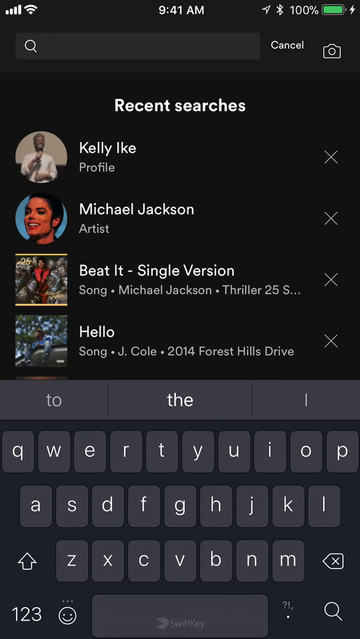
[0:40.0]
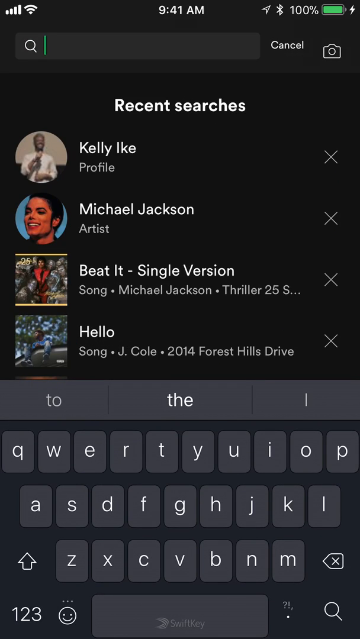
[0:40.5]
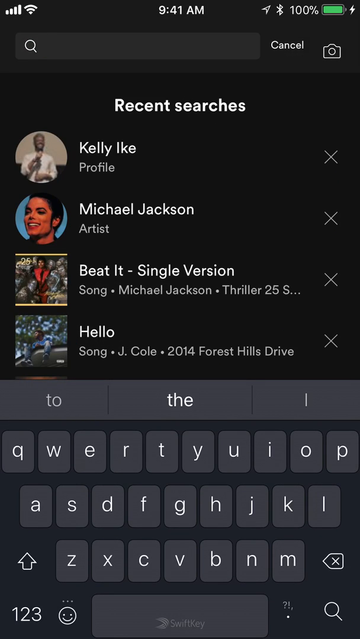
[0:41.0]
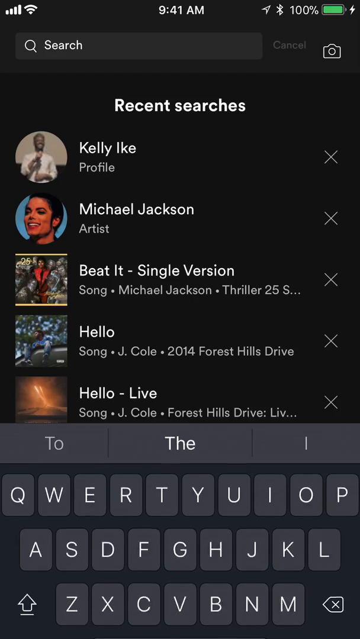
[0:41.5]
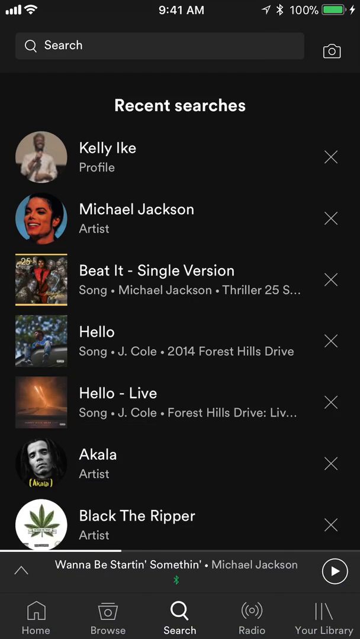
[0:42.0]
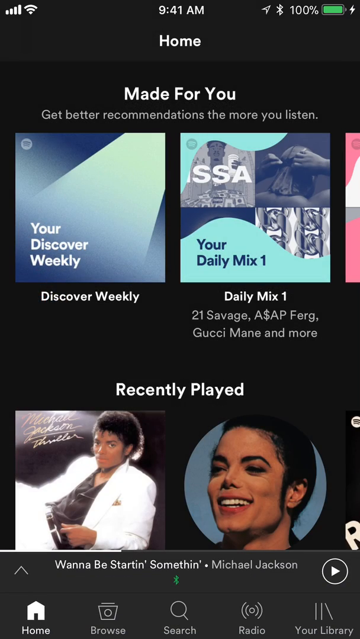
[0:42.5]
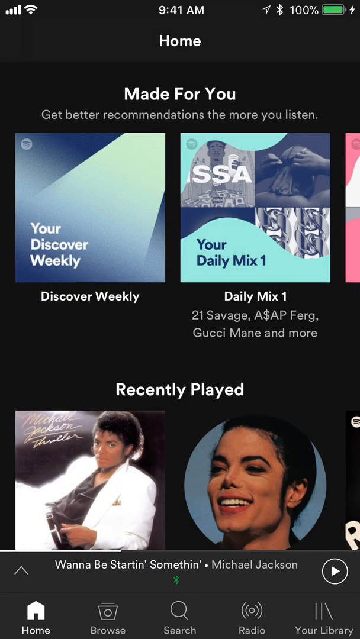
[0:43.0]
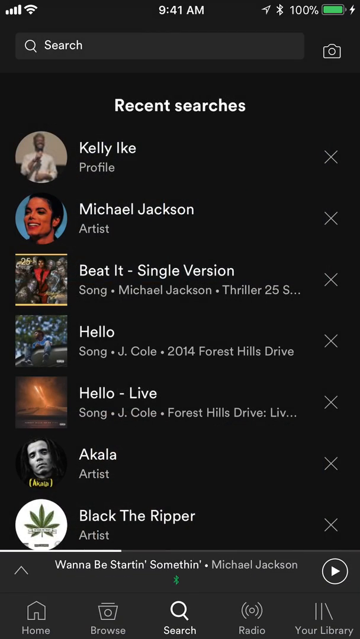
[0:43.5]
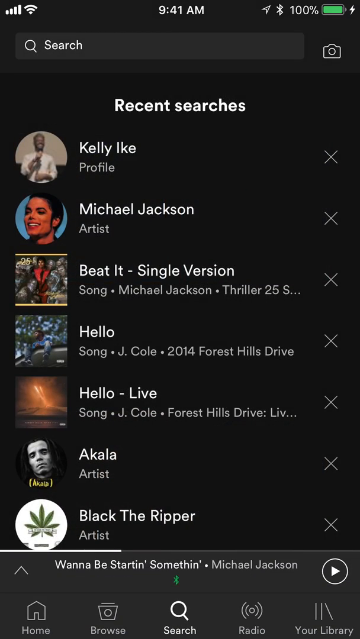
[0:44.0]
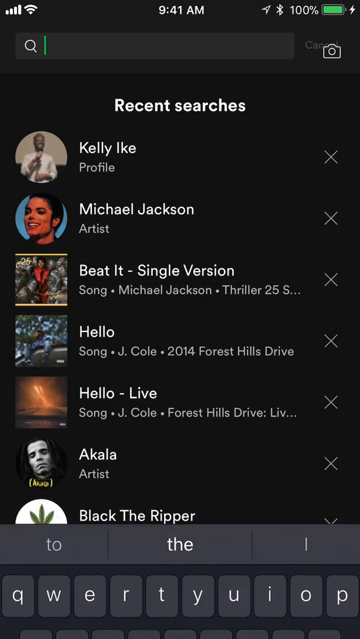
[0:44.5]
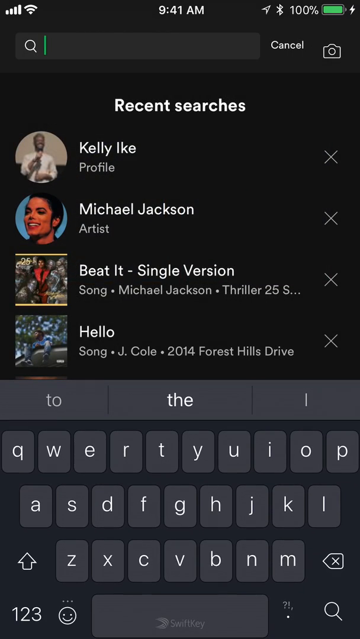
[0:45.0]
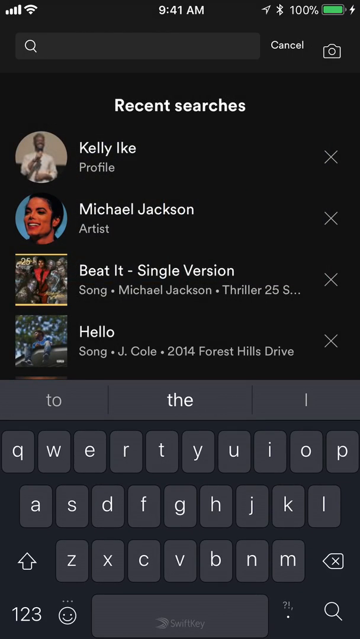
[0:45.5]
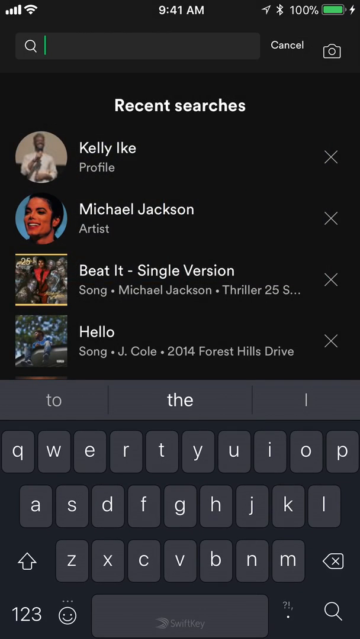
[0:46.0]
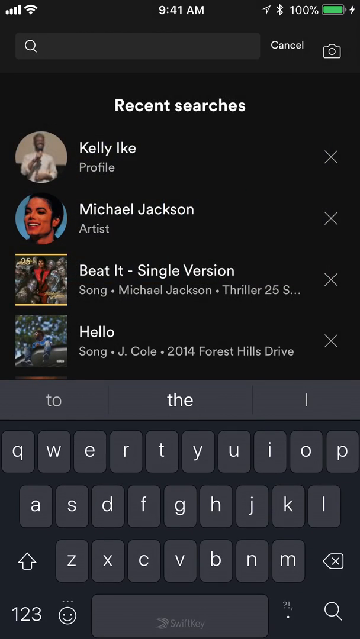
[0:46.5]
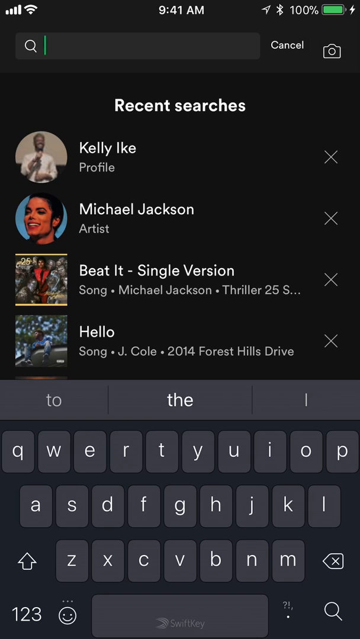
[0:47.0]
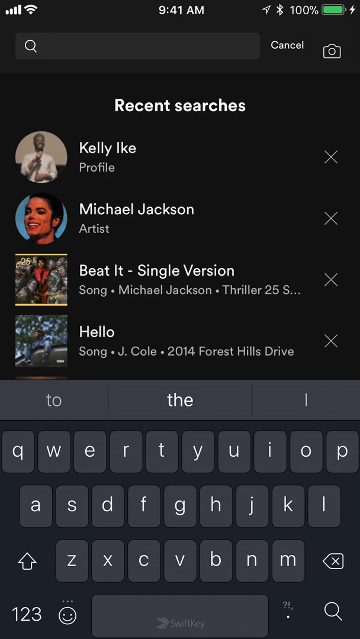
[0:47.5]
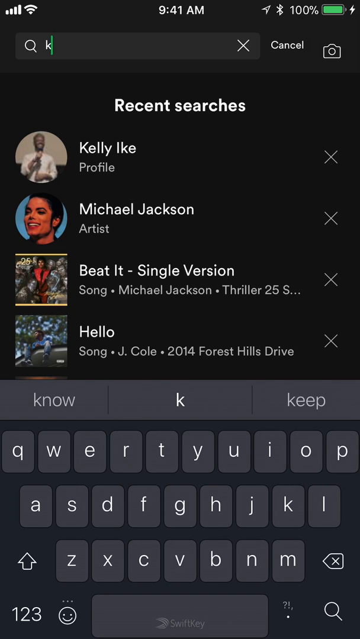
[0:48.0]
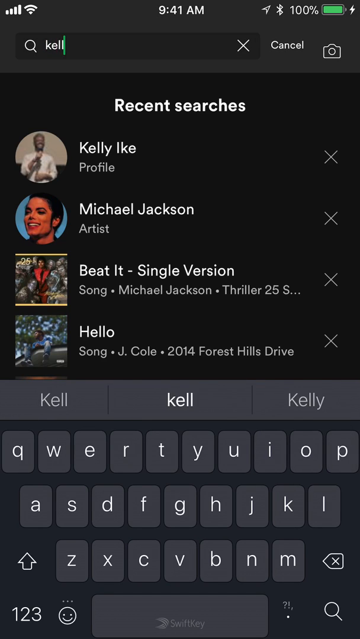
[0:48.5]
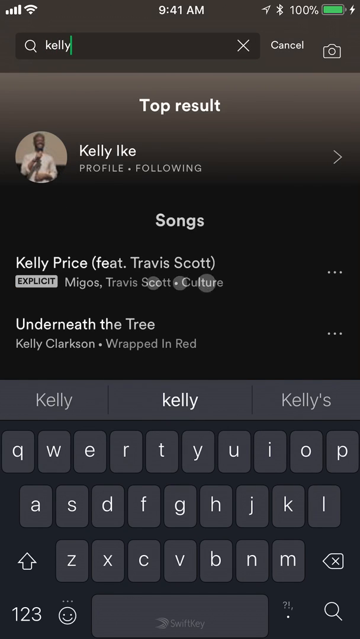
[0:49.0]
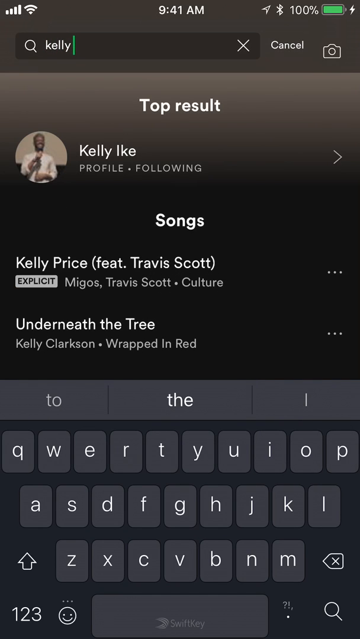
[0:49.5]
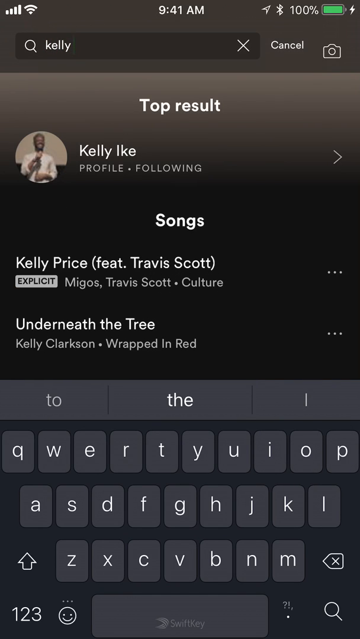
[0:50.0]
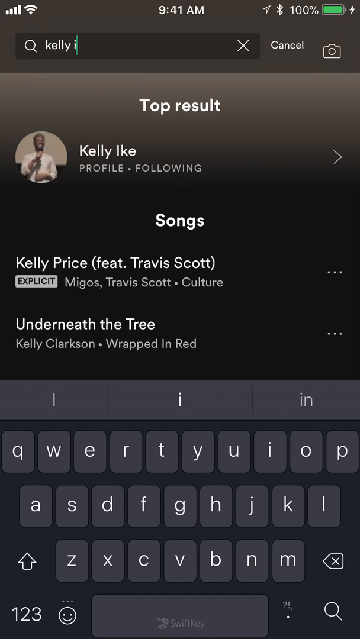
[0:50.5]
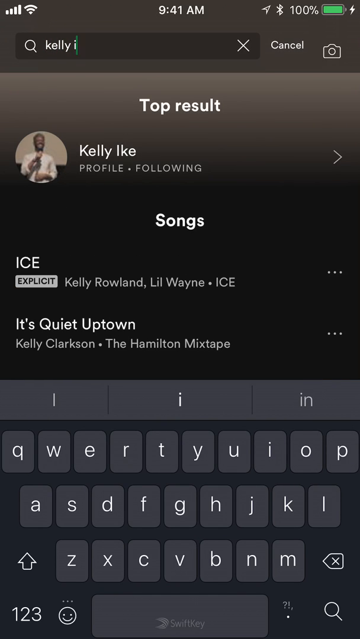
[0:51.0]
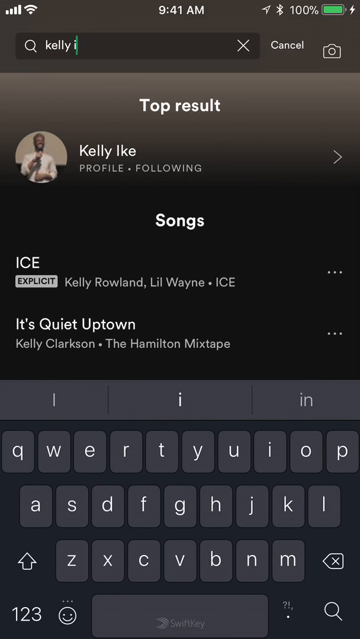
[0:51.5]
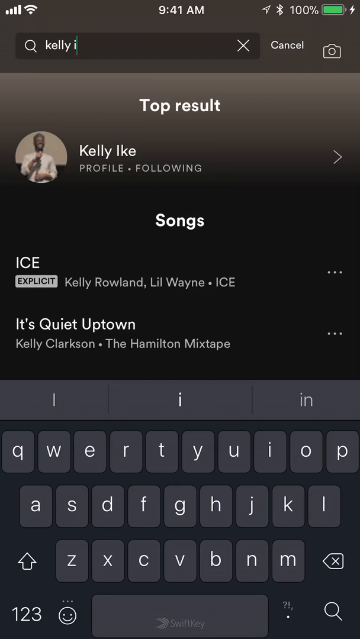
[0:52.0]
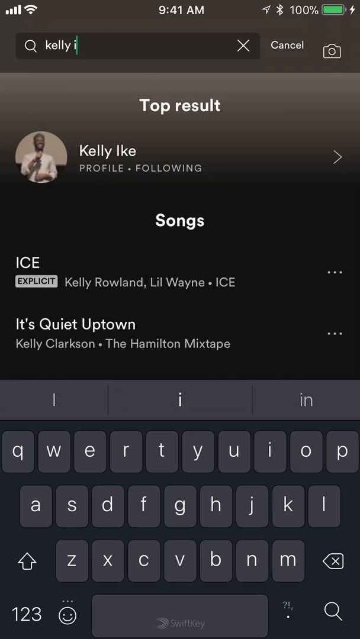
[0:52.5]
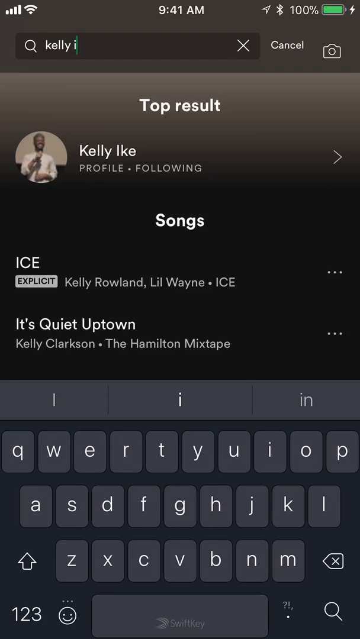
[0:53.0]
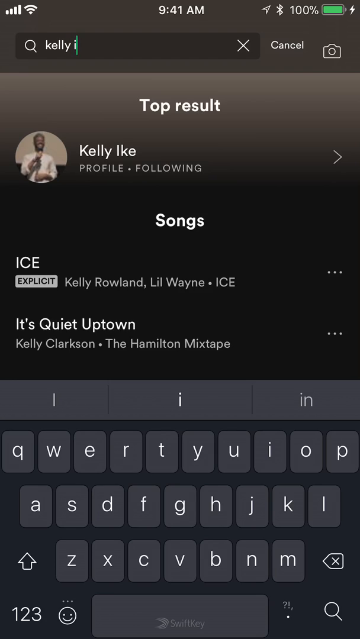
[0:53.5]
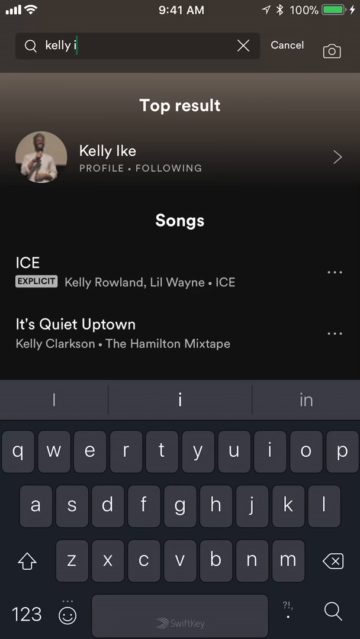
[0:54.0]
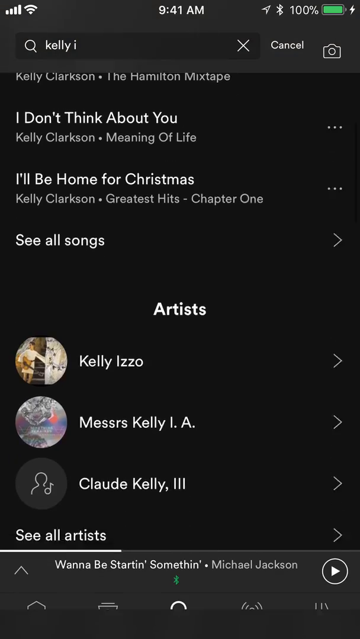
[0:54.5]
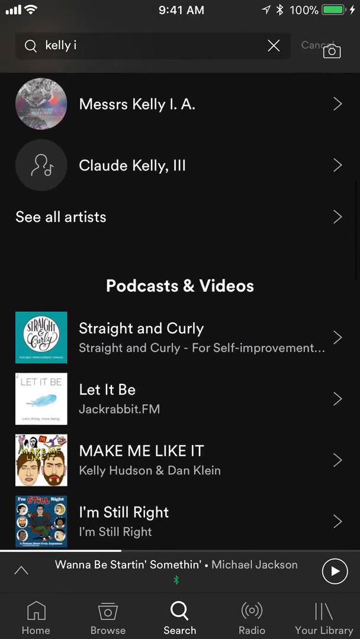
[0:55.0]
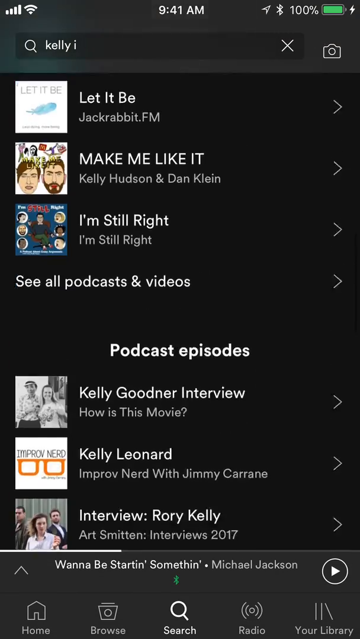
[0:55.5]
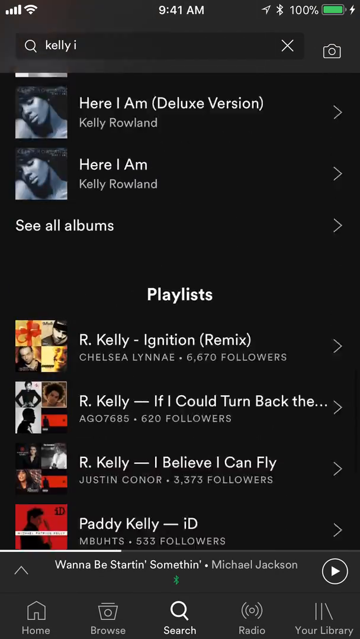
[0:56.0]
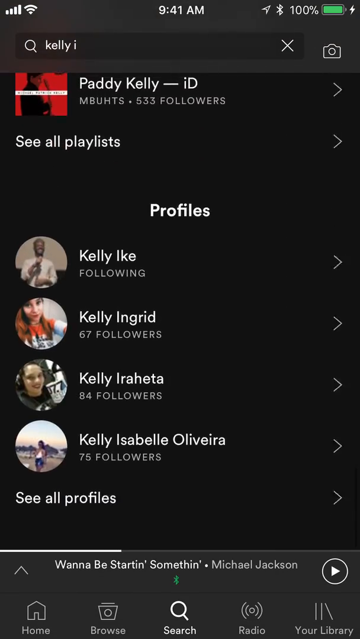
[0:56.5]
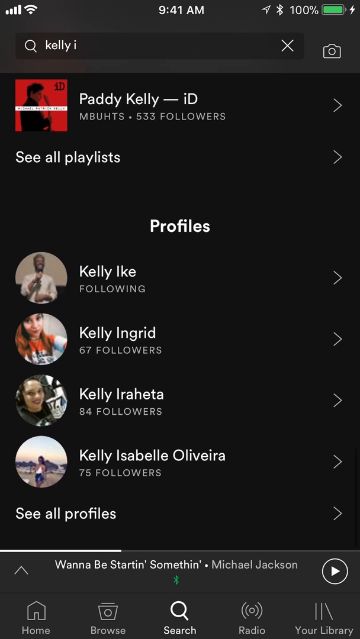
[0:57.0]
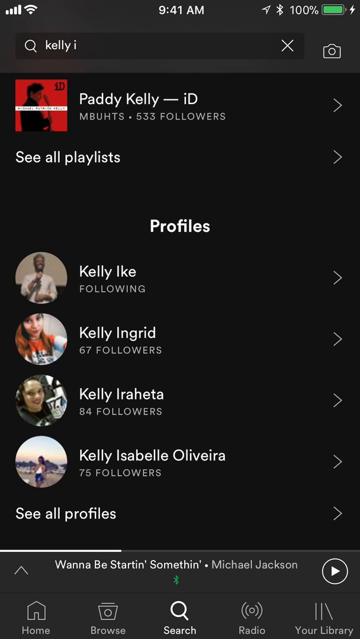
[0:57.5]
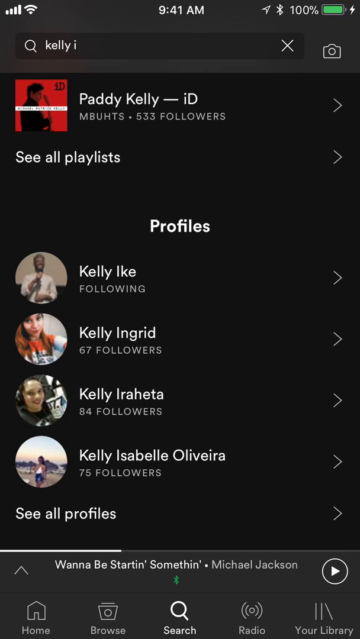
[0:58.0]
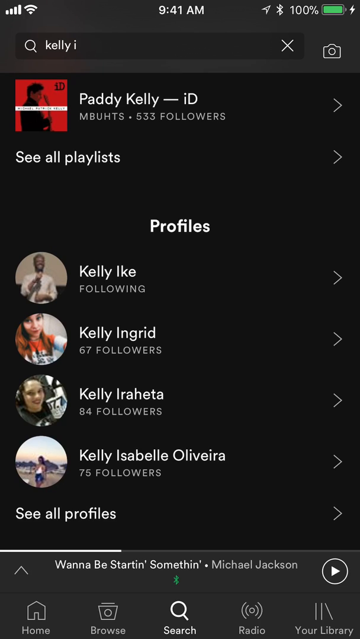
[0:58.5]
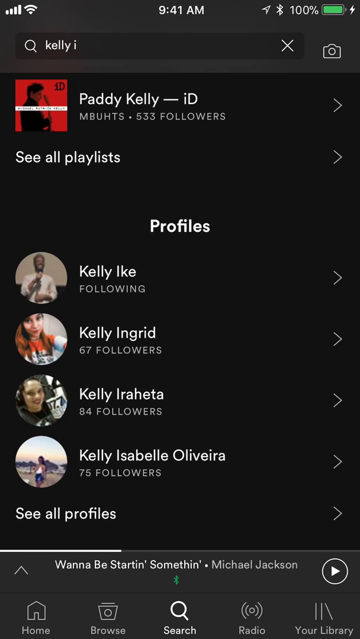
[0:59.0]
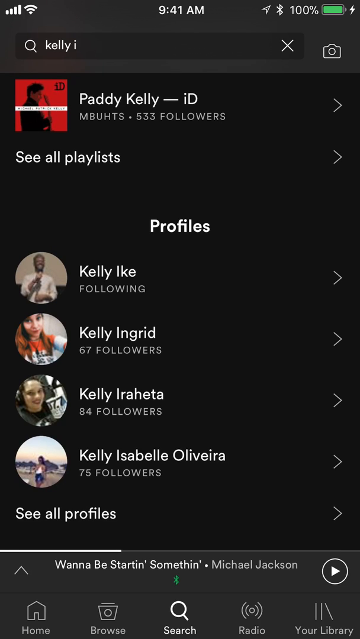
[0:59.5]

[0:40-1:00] The recent searches page lists Kelly Ike, J. Cole, Michael Jackson, the single Beat It, Hello by J. Cole, Hello Live by J. Cole, the artist Akala, and the artist Black the Ripper. A keyboard pops up and Kelly Ike is searched for. The top result is the profile, followed by songs including Kelly Price featuring Travis Scott, Explicit Lyrics, Migos, Travis Scott Culture, Underneath the Tree, a Kelly Clarkson song from her Wrapped in Red album, It's Quiet Uptown, a Kelly Rowland song, and a Kelly Clarkson song. Many results with the name Kelly pop up, and the view scrolls down to the bottom to show the playlists of the different Kellys, or of Kelly Ike from the recent searches.